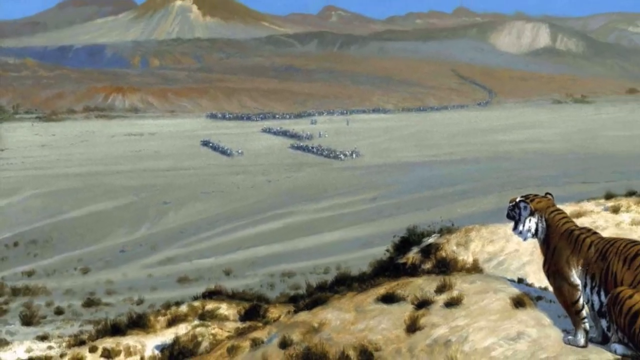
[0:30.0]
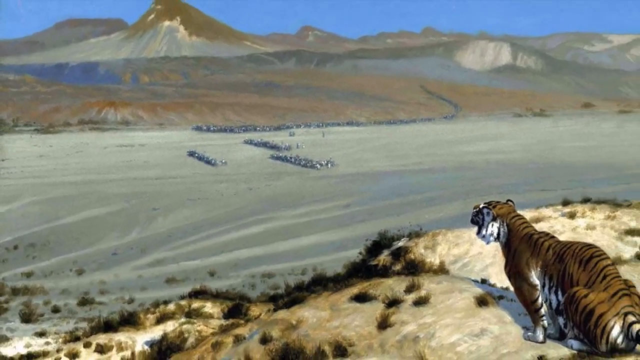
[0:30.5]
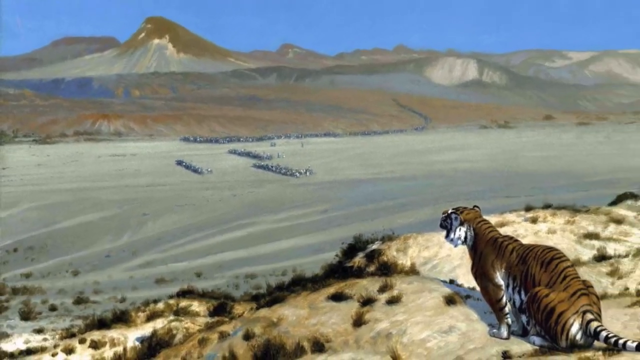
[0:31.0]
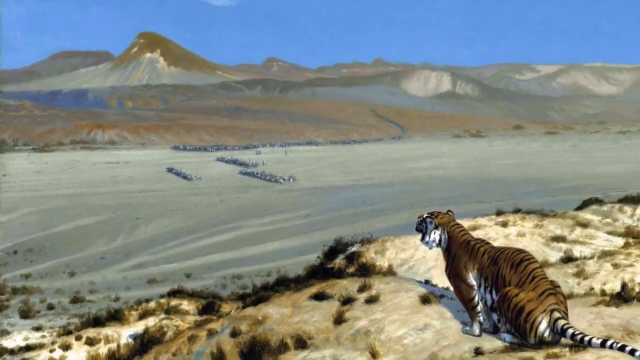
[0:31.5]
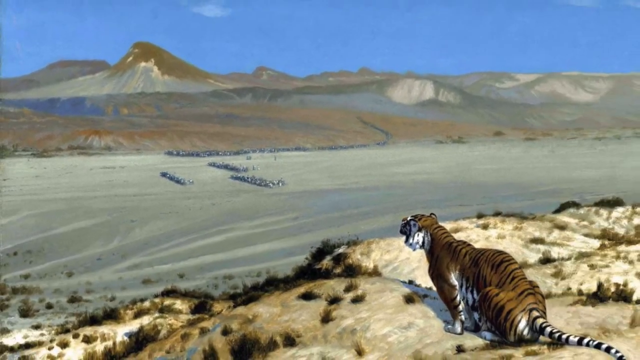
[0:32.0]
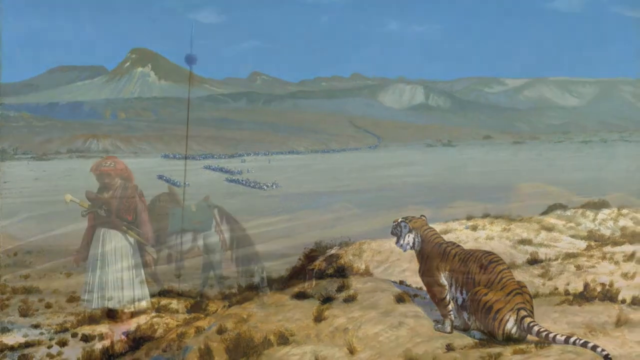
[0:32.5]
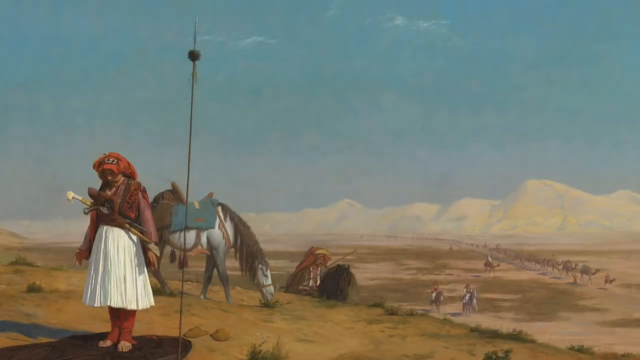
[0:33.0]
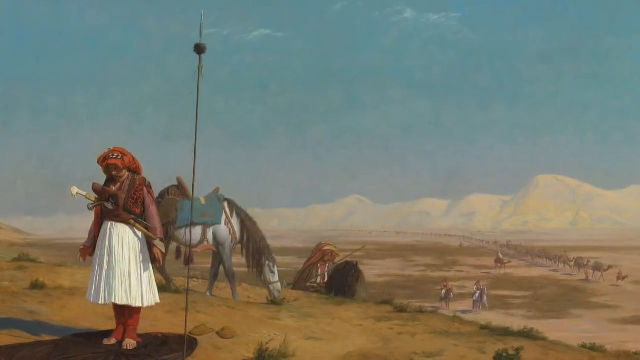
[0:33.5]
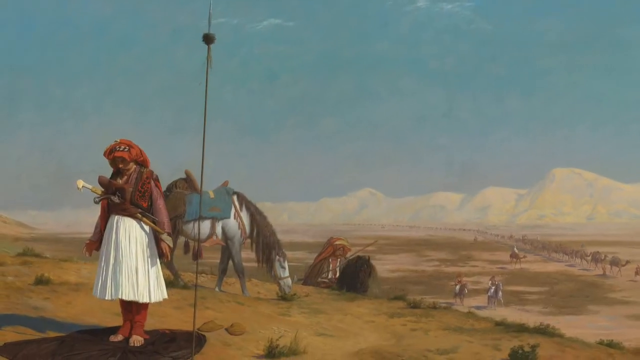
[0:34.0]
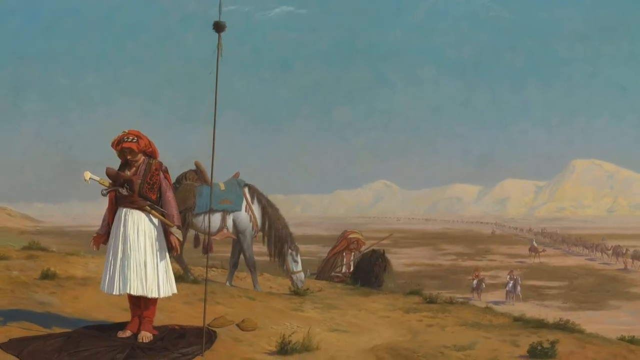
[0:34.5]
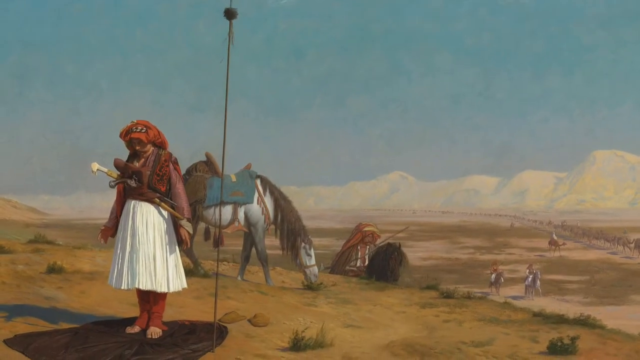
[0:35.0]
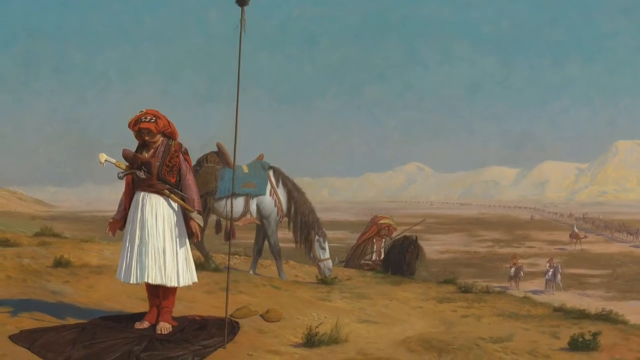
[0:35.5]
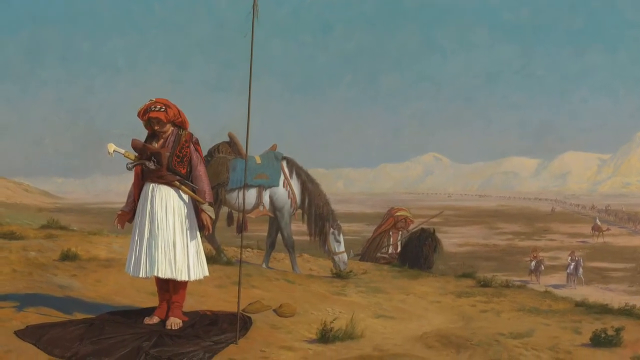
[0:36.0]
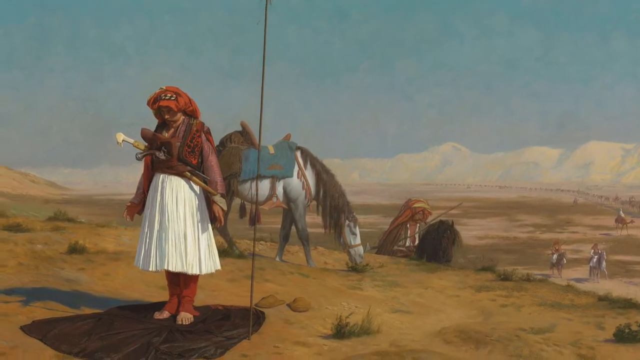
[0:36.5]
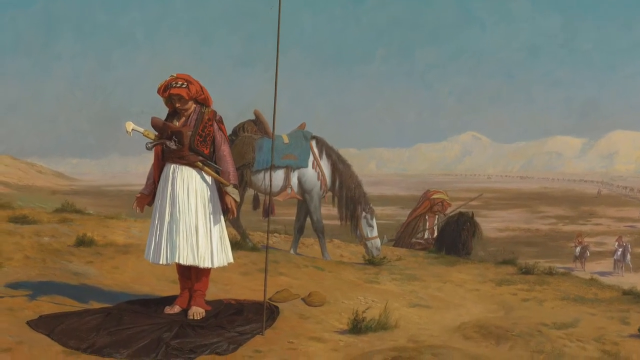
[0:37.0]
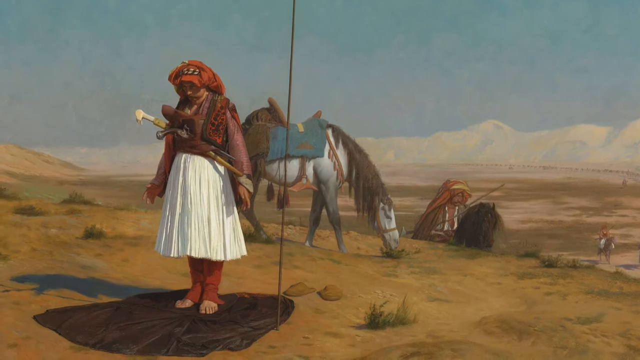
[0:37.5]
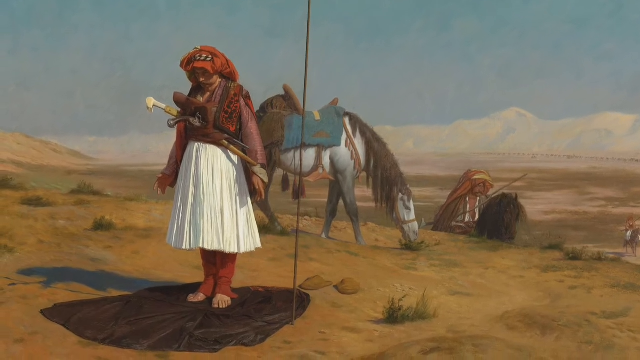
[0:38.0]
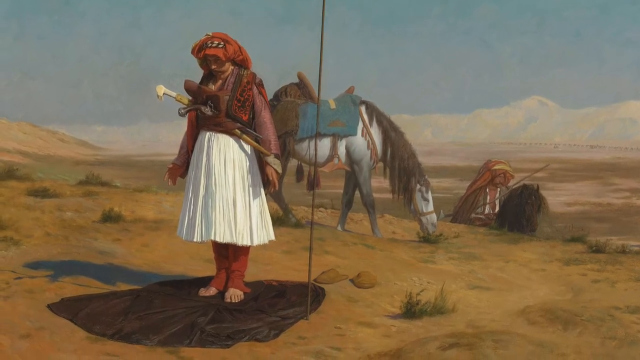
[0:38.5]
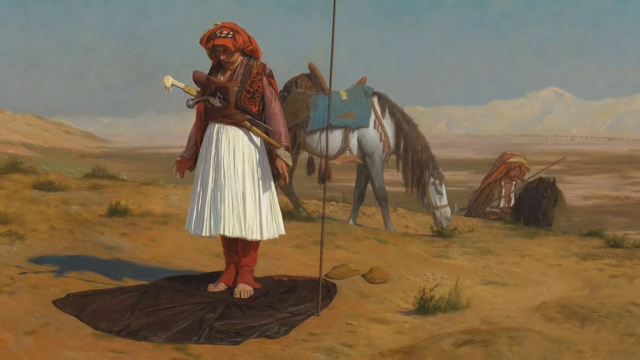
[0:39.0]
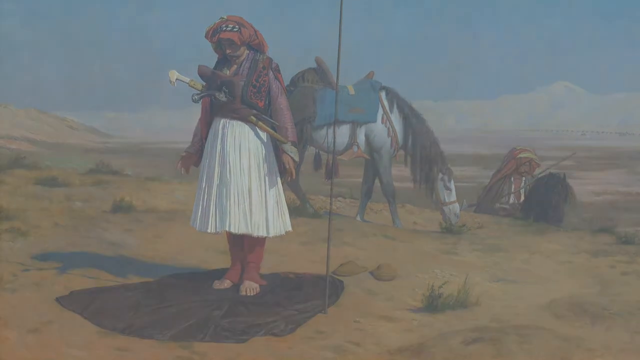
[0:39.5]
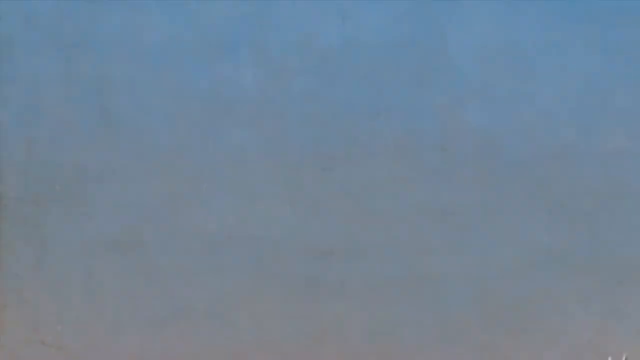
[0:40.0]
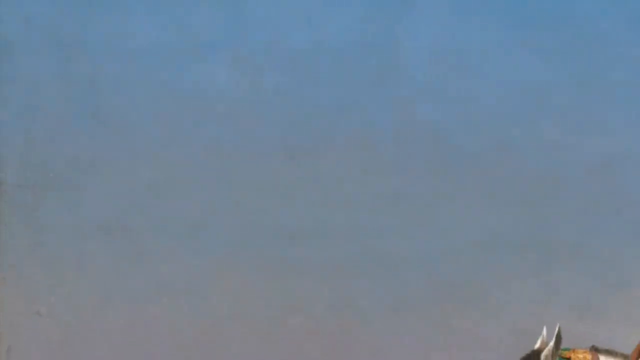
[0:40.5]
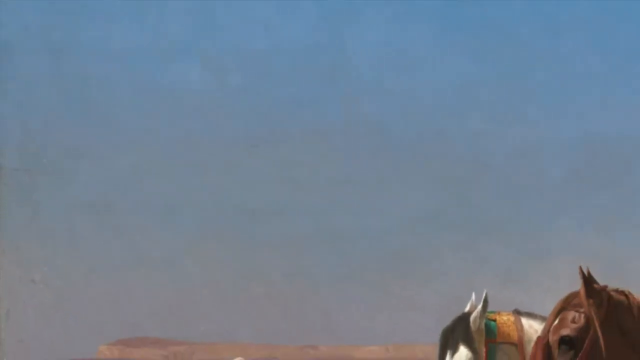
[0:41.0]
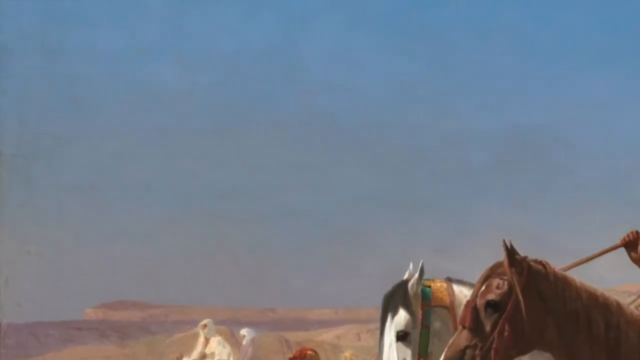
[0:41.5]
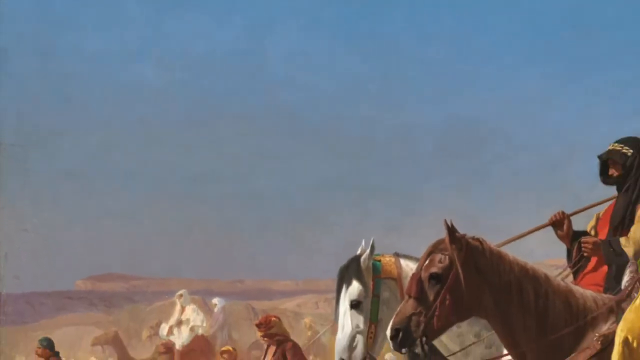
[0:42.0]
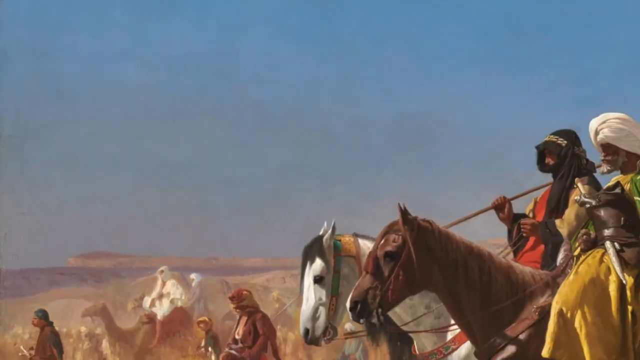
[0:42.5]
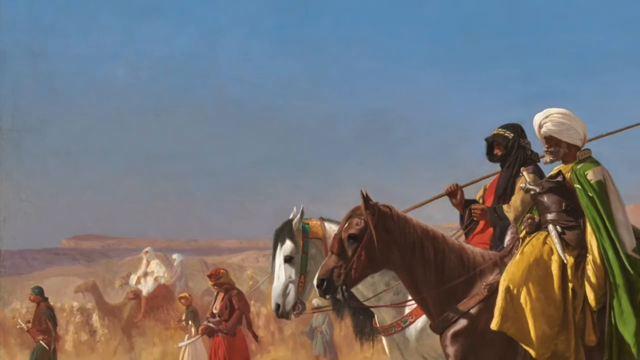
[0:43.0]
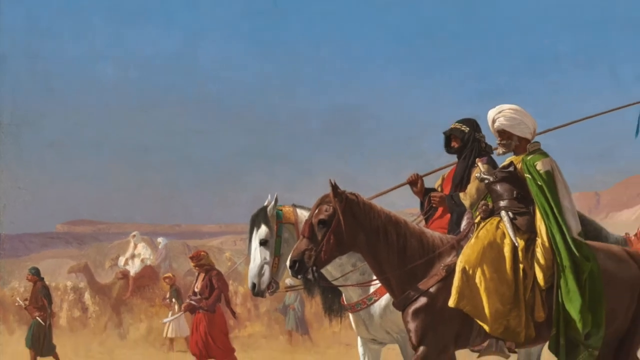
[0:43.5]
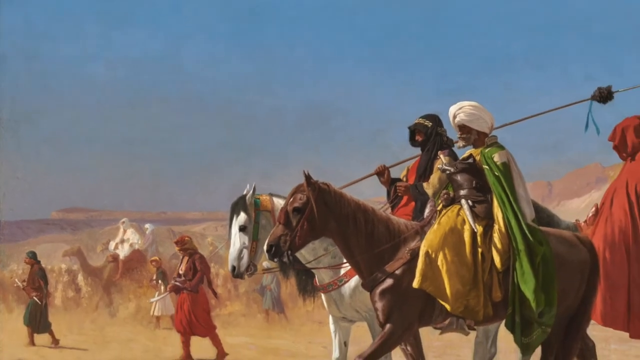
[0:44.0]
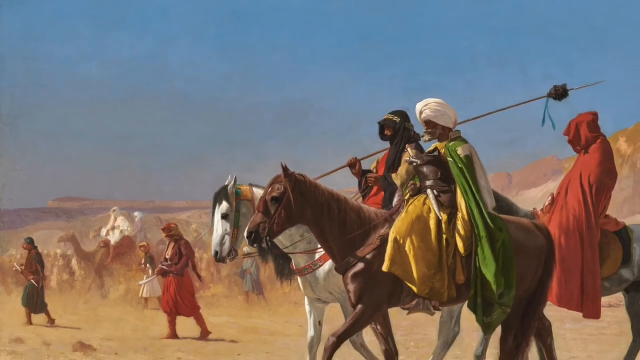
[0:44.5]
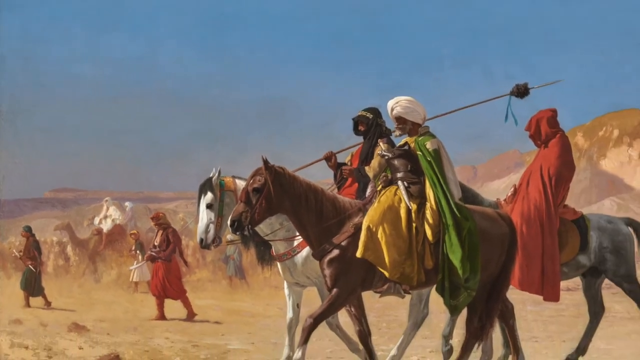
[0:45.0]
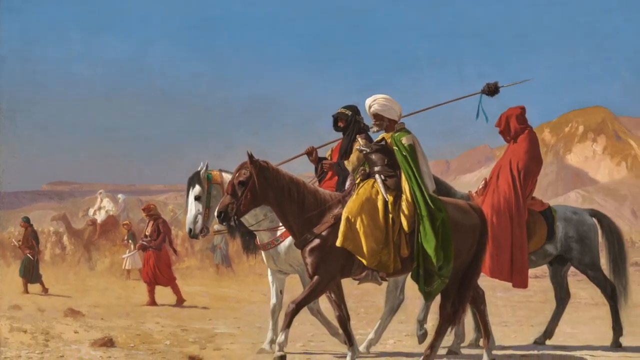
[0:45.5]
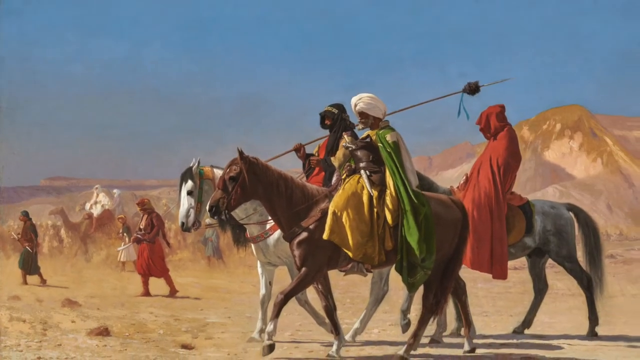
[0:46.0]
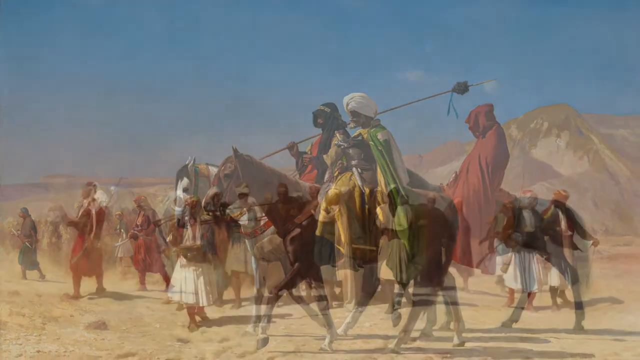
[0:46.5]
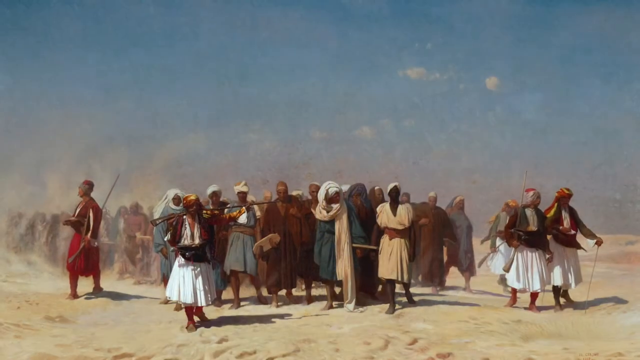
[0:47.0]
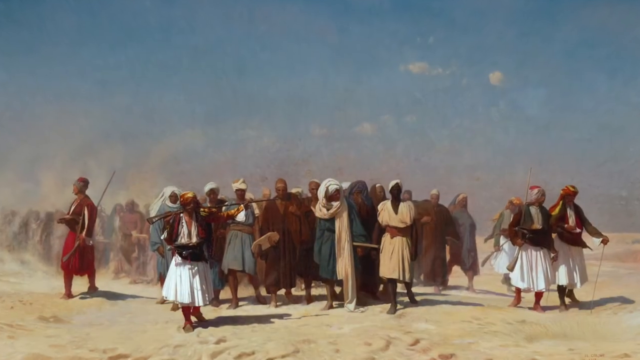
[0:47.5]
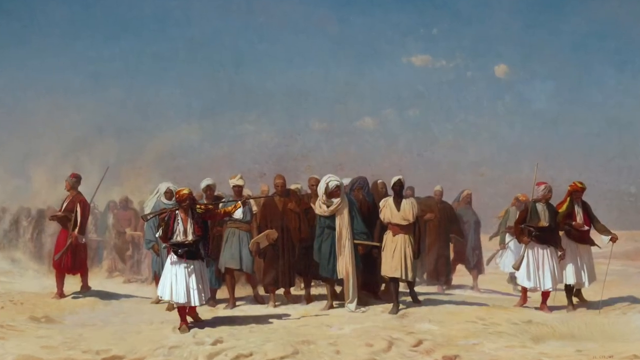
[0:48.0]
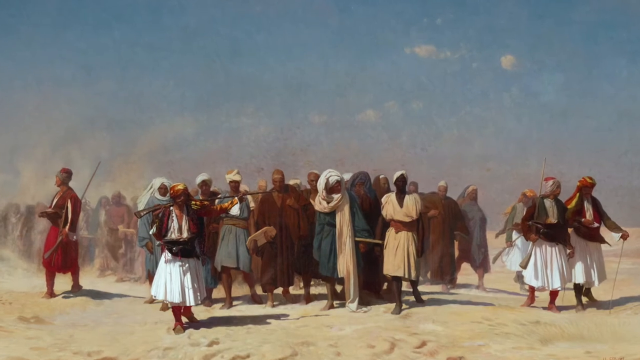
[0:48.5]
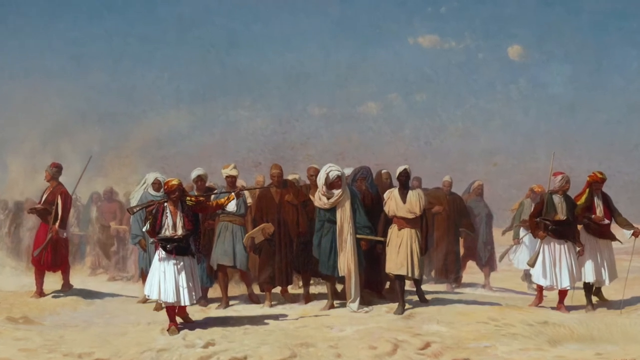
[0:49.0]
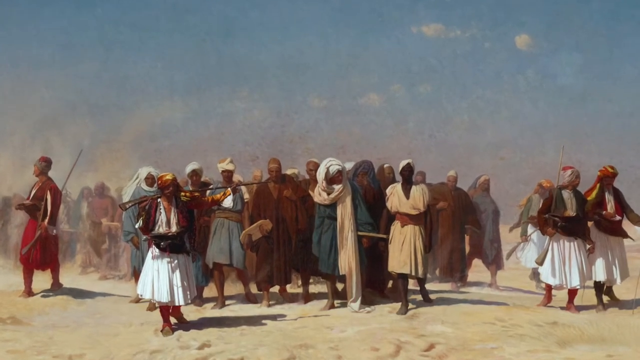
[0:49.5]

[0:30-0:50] A tiger is shown first, on a cliff, apparently looking down at some people below, and then the camera pans out. The people below wear what looks like war dress, some type of uniform, and one individual appears to have swords at the side of the hip. The camera pans out to show these people, and it all looks like it is possibly a painting. They are on what seem to be horses and wear clothing of various colors; most of them are males. The camera comes around to show a group of males from the front, maybe 20 or so, in unique clothing. One wears what looks almost like a dress, so it may or may not be a female. Some wear long cloaks with hoods in different colors, one black and another red. They sit on horses, and these individuals are mainly of color.